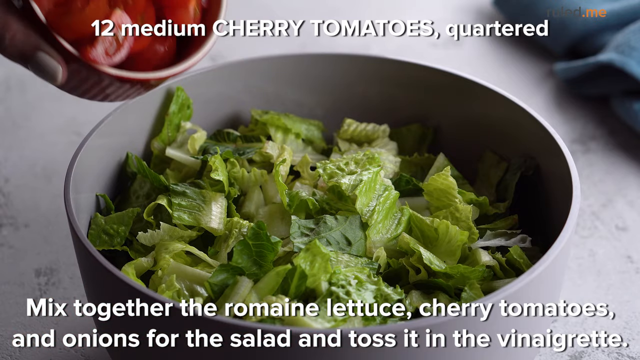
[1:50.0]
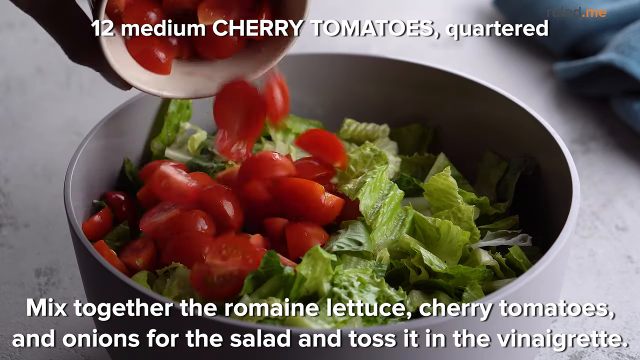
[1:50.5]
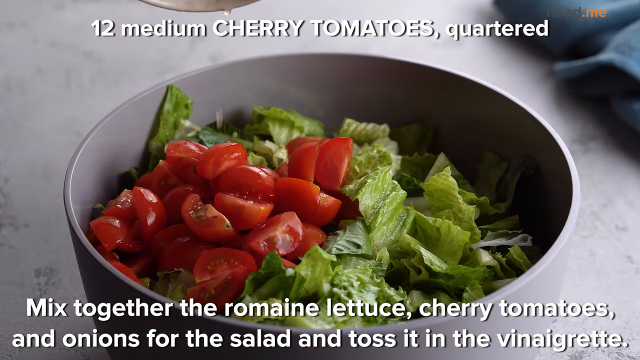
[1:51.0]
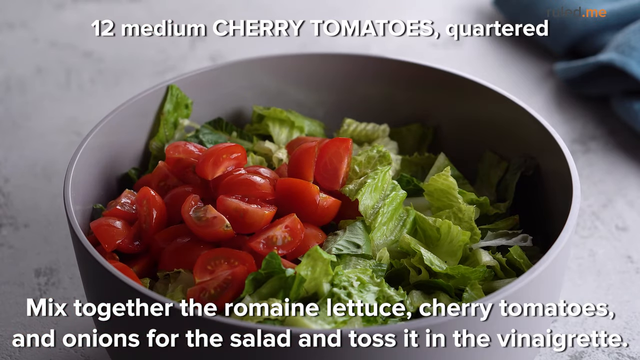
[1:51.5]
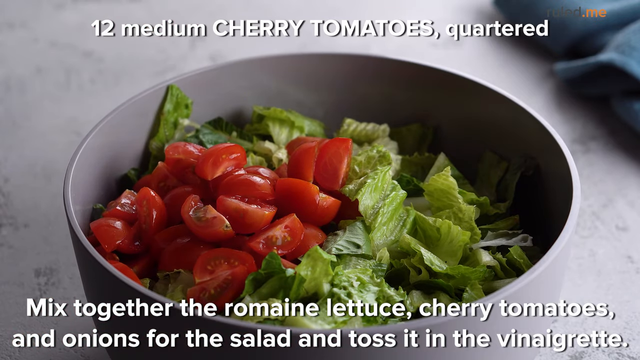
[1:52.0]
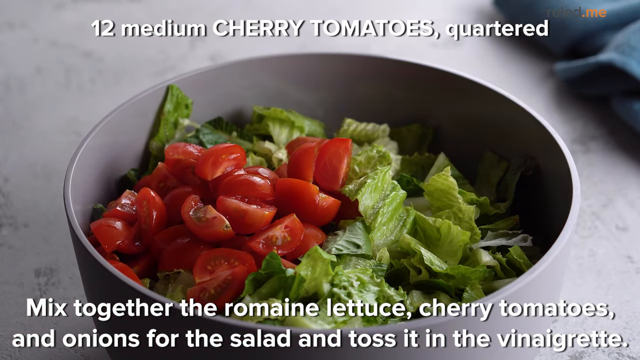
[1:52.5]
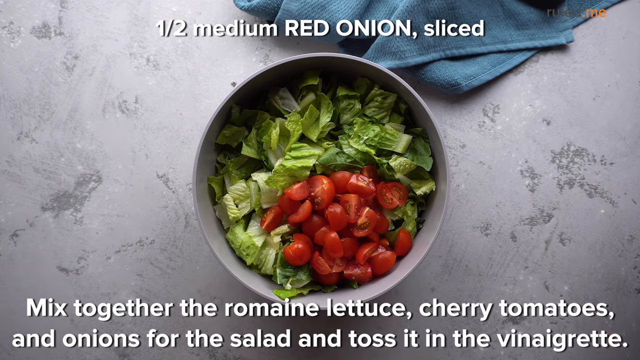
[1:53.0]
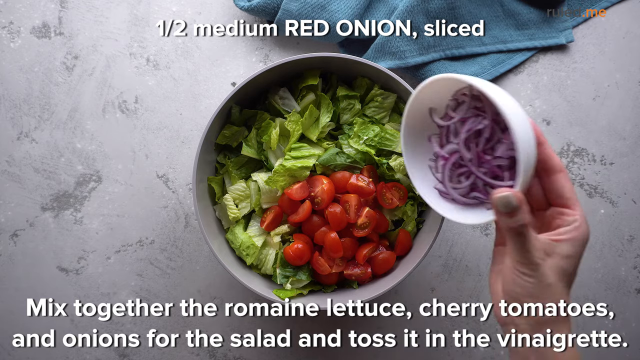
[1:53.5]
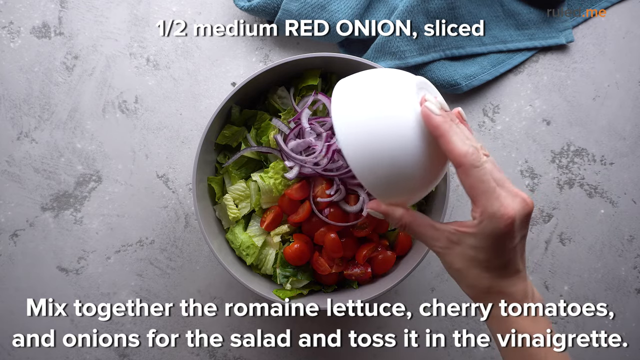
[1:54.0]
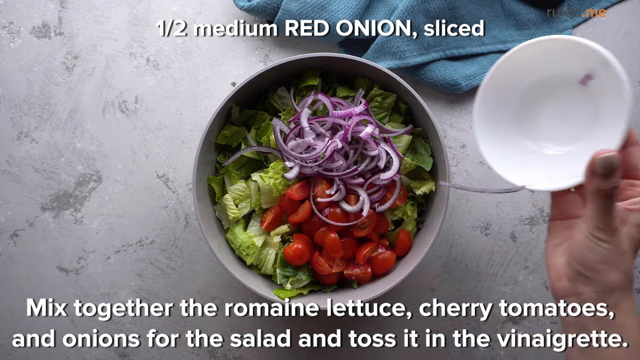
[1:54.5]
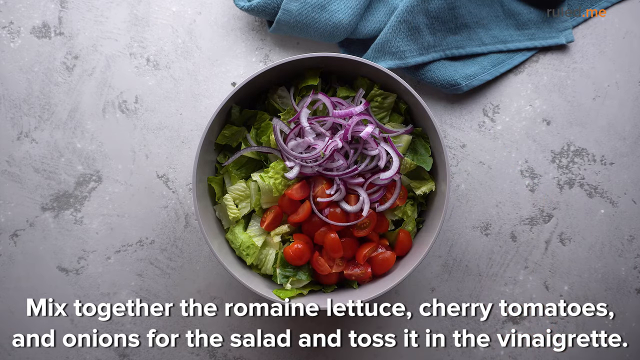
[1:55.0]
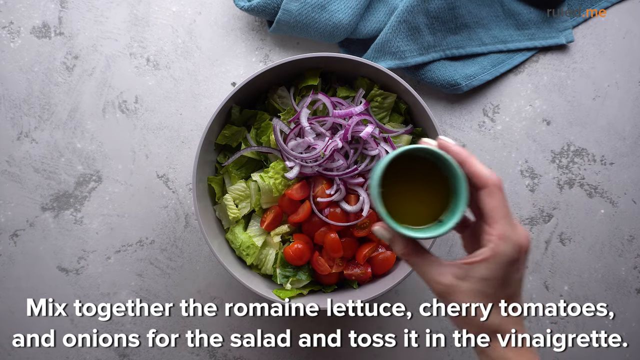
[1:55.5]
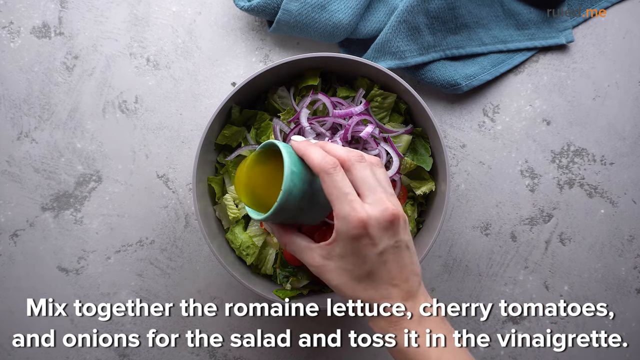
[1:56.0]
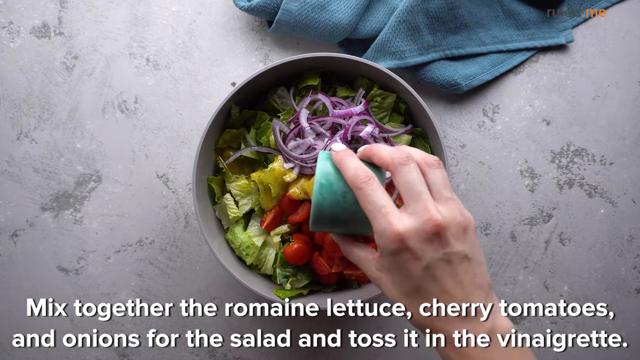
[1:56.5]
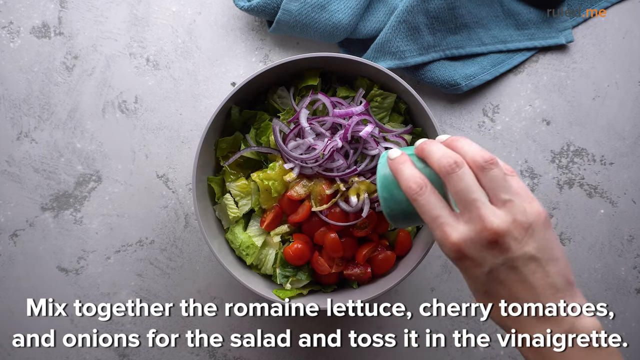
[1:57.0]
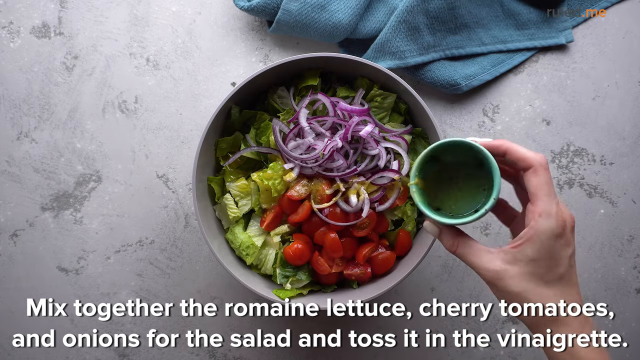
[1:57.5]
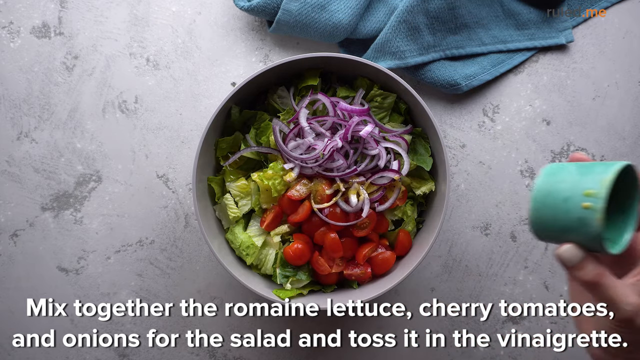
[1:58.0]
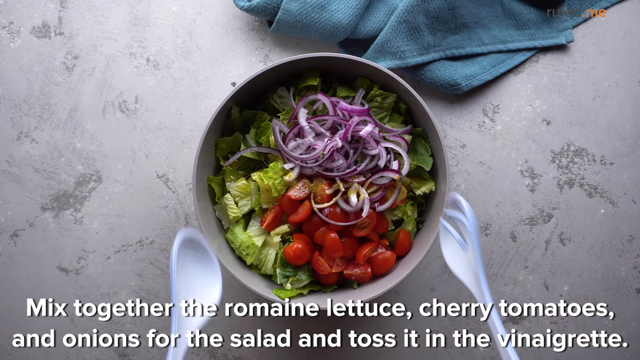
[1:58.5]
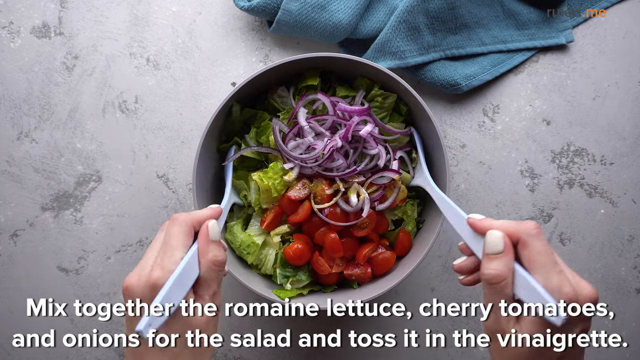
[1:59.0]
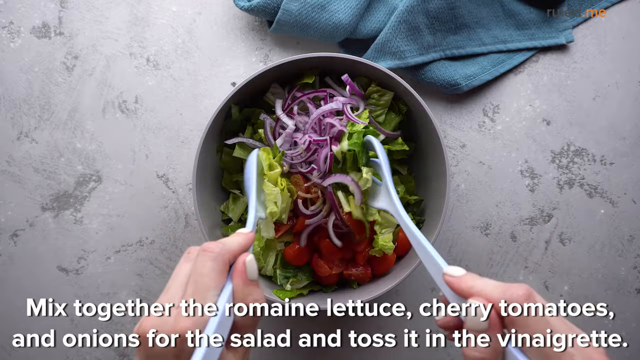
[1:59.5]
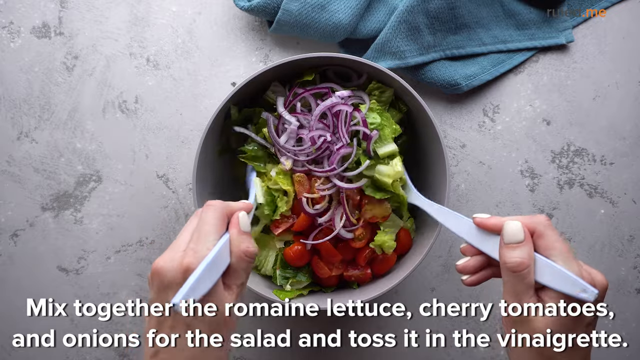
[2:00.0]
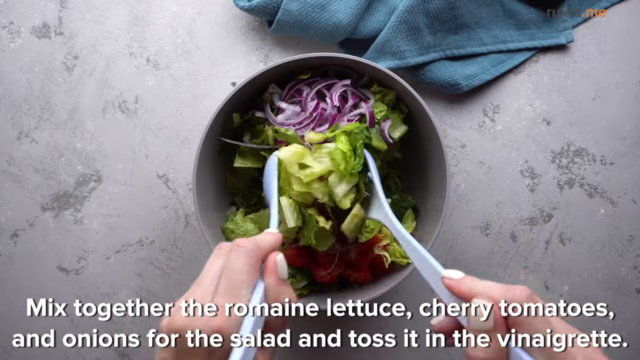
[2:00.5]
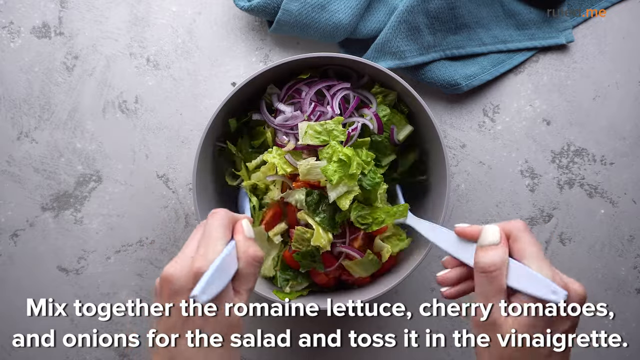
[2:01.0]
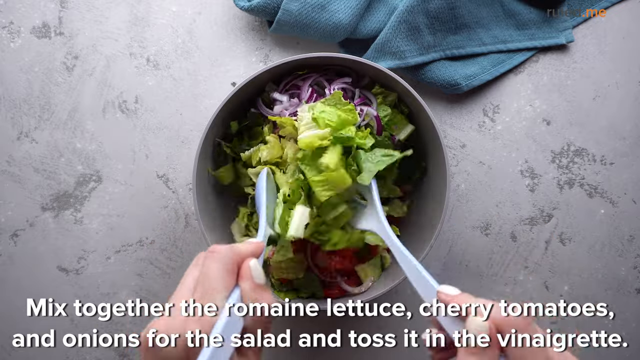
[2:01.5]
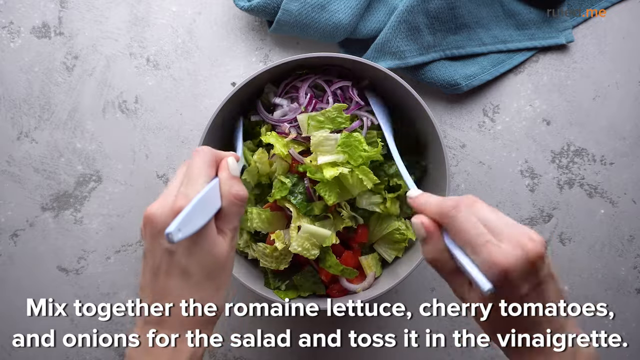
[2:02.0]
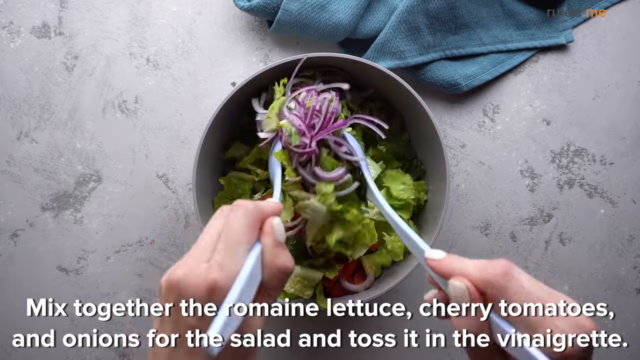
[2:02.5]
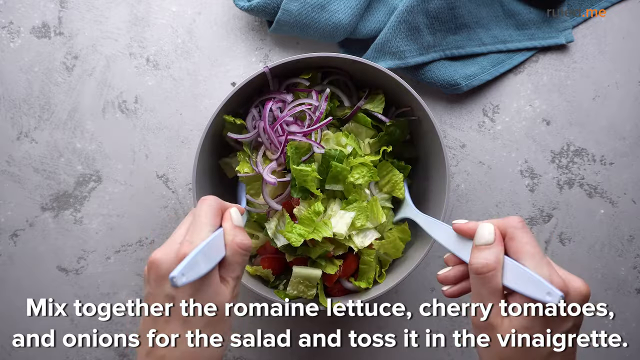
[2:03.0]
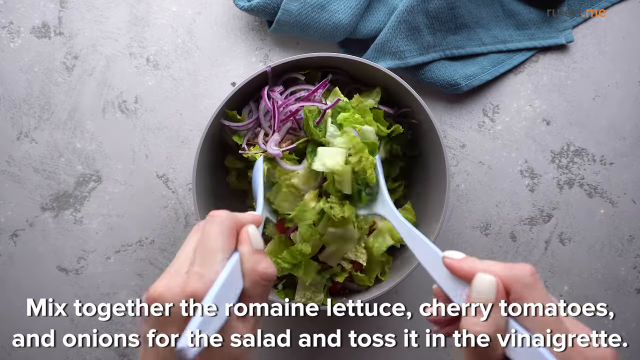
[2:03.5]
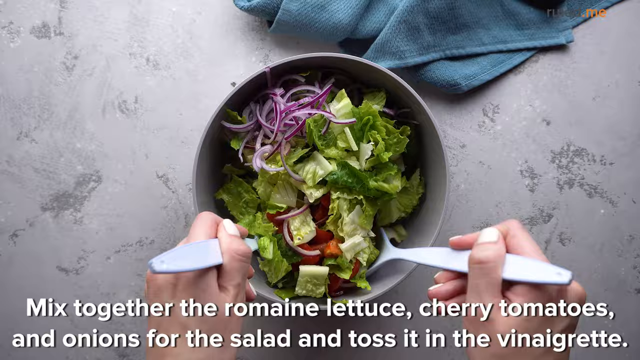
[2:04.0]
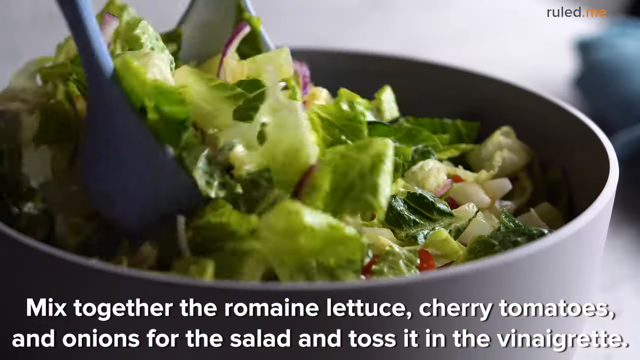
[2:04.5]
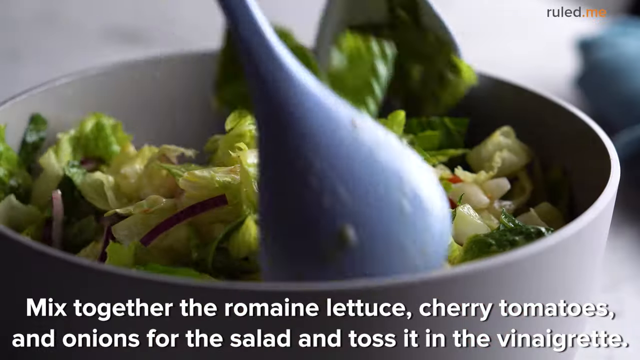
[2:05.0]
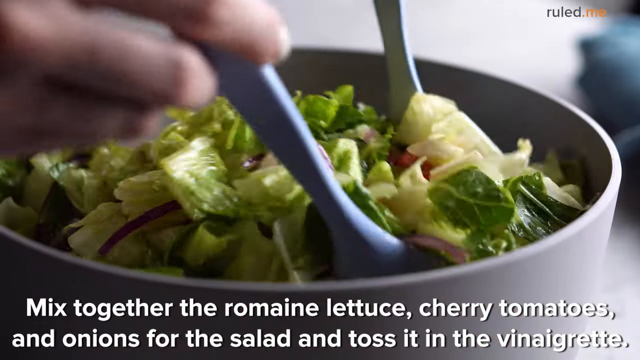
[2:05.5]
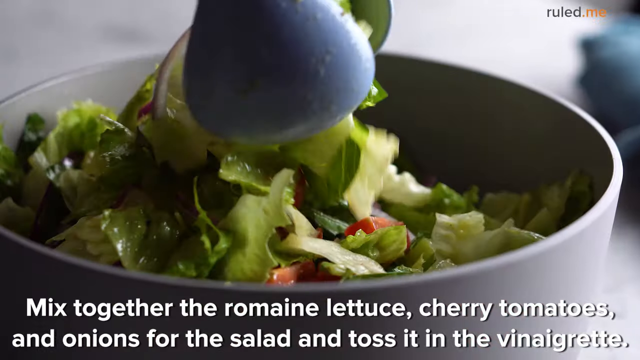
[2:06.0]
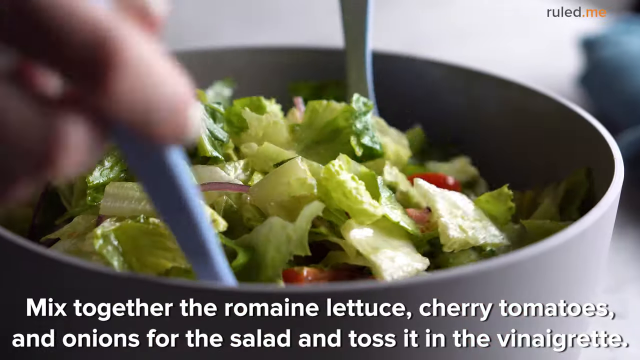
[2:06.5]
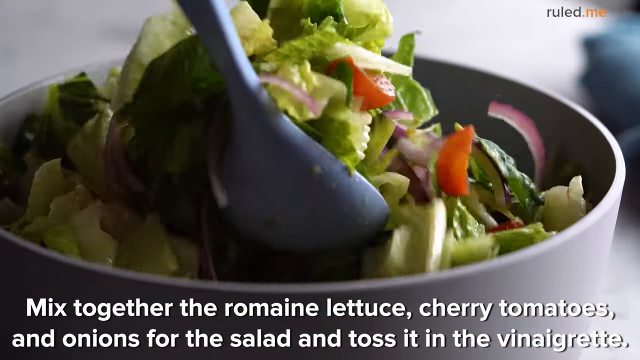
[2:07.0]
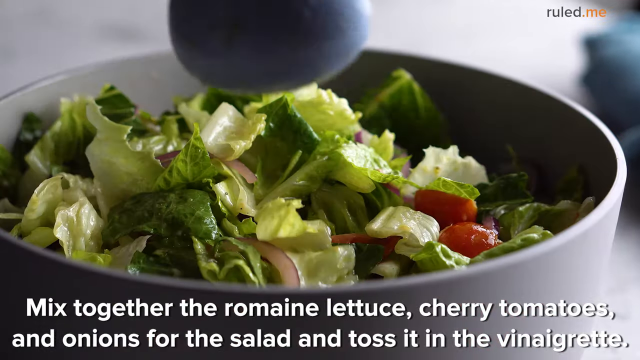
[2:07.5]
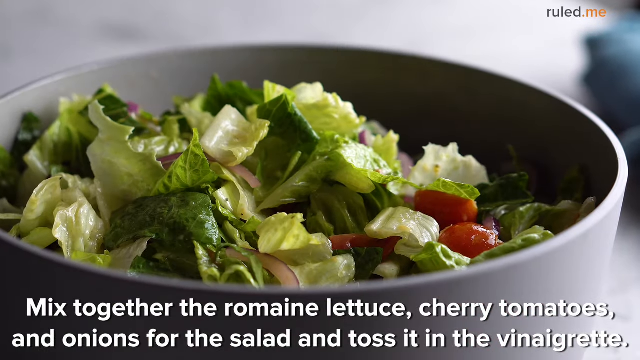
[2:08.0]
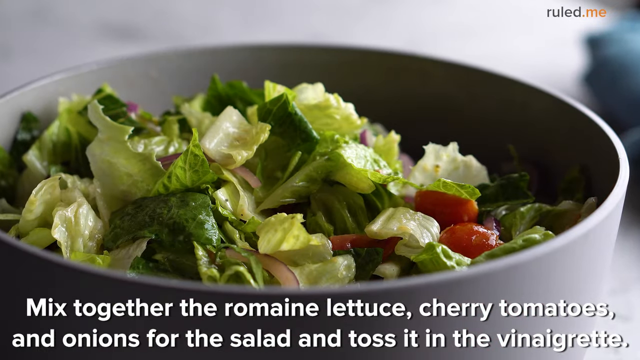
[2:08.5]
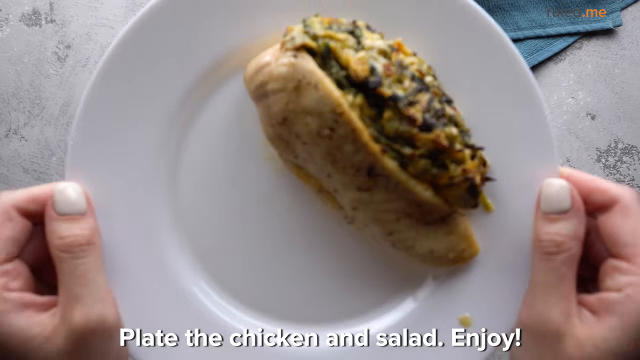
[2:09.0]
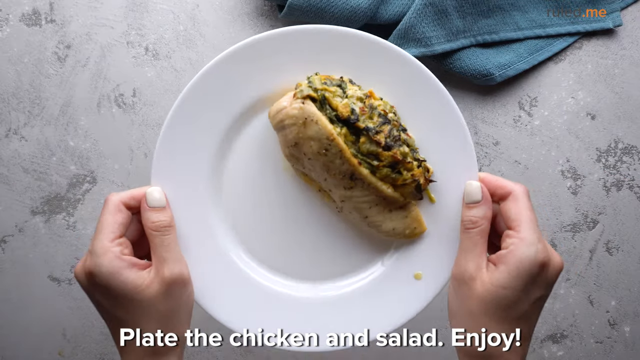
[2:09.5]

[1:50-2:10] Someone has put cherry tomatoes in one section of a bowl of lettuce and dumps in onions and some dressing, then tosses the lettuce with two very long salad spoons. Text at the top says "12 medium cherry tomatoes quartered," and text at the bottom gives instructions to mix the romaine lettuce and cherry tomatoes, mentions half a medium red onion, and says to pour the dressing over the ingredients. Tongs are used and the lettuce is stirred so that everything is distributed evenly. The camera shows a close-up of the tossed salad, then cuts to the chicken breasts as someone places down a white plate holding one of the stuffed chicken breasts.